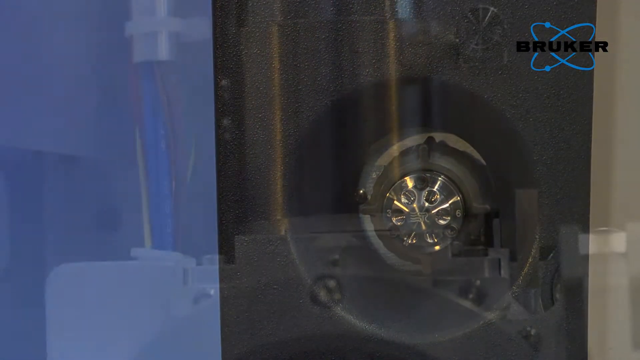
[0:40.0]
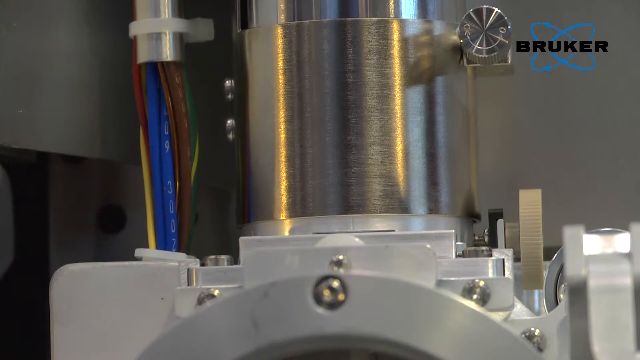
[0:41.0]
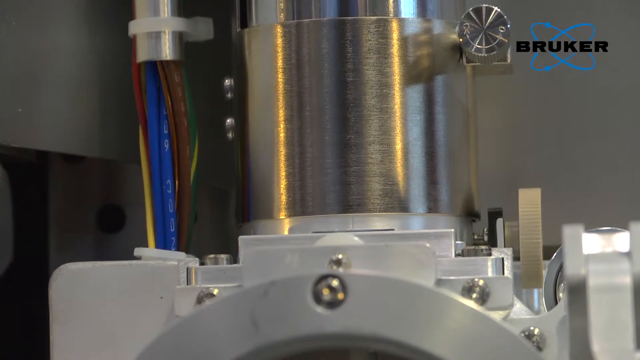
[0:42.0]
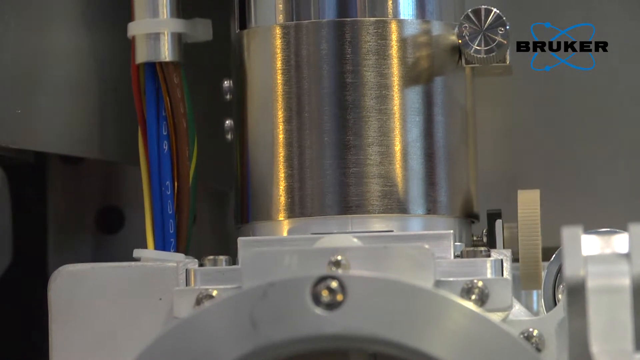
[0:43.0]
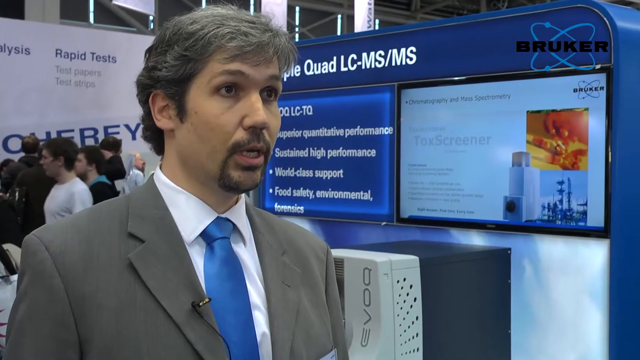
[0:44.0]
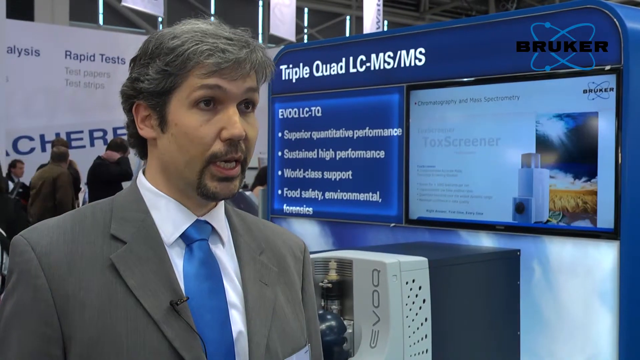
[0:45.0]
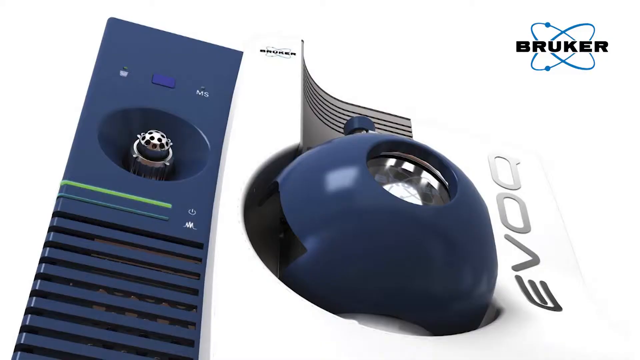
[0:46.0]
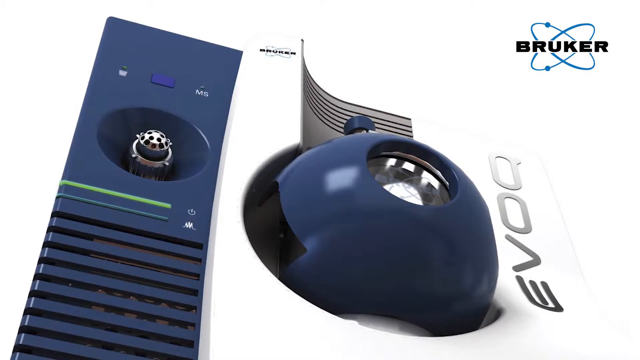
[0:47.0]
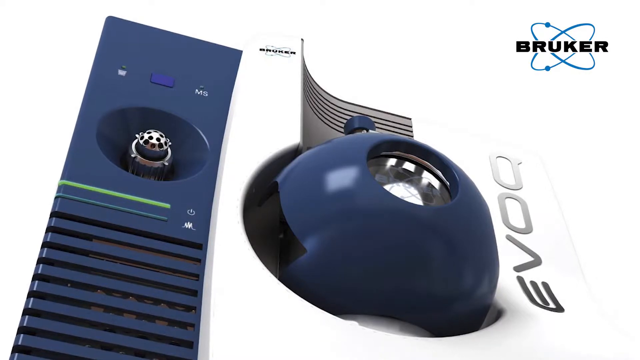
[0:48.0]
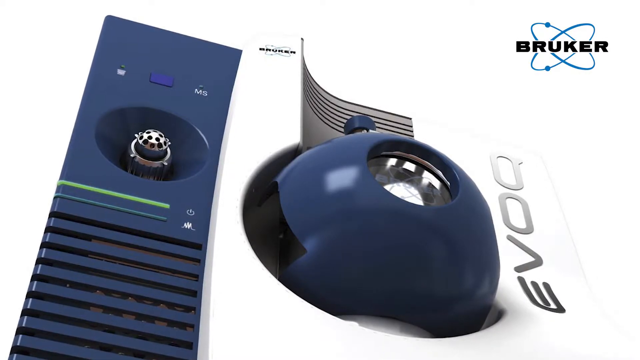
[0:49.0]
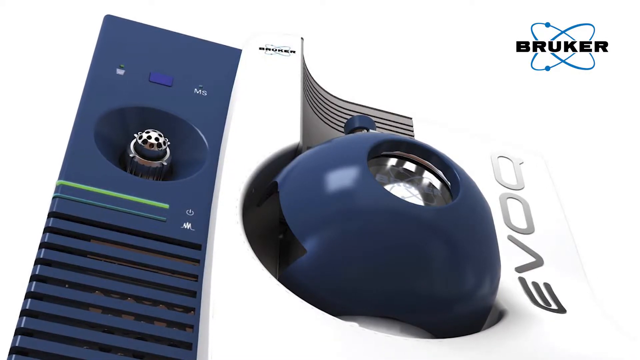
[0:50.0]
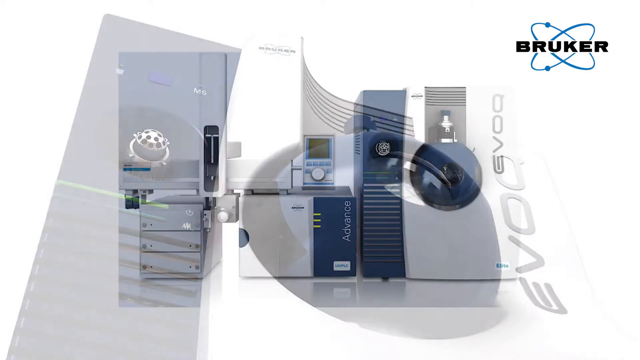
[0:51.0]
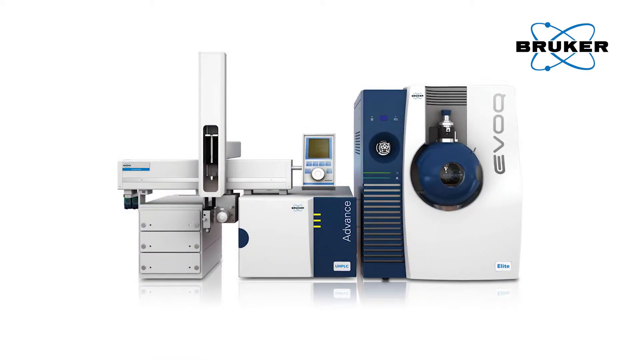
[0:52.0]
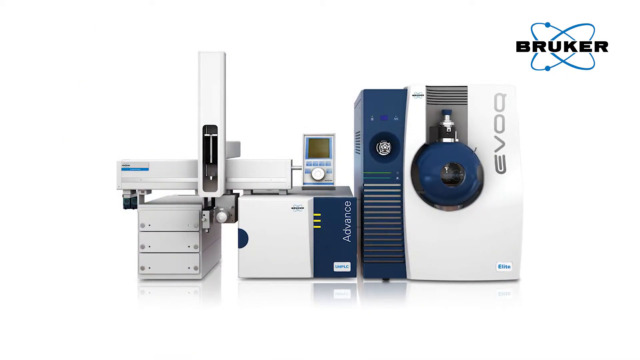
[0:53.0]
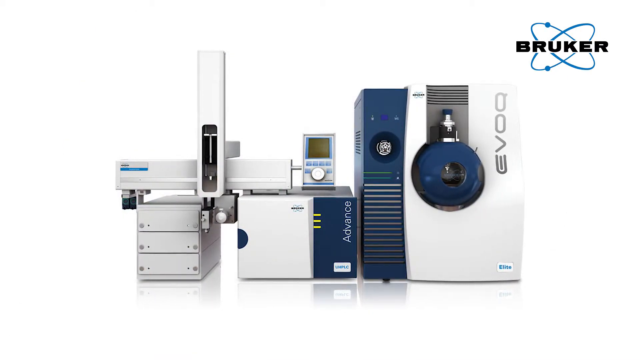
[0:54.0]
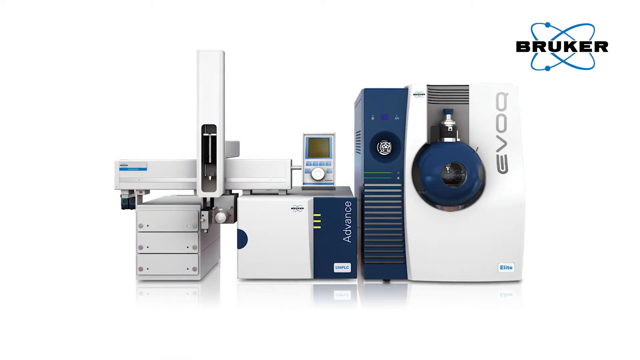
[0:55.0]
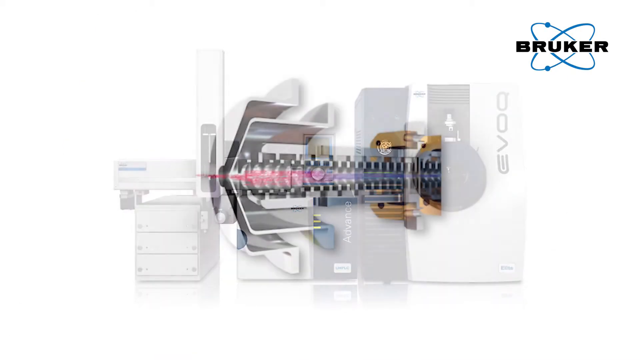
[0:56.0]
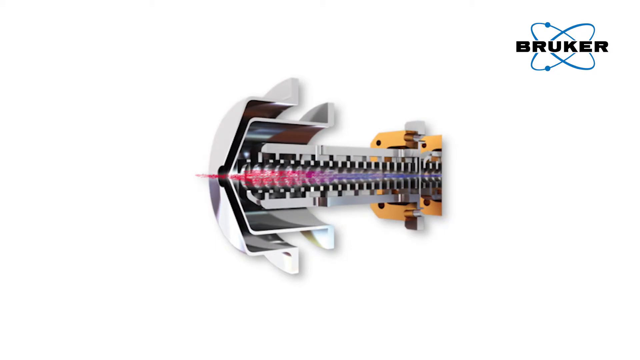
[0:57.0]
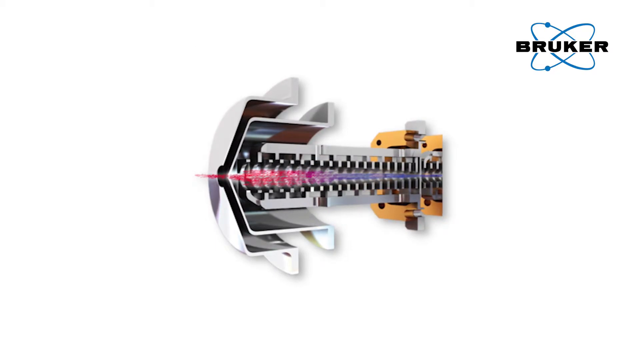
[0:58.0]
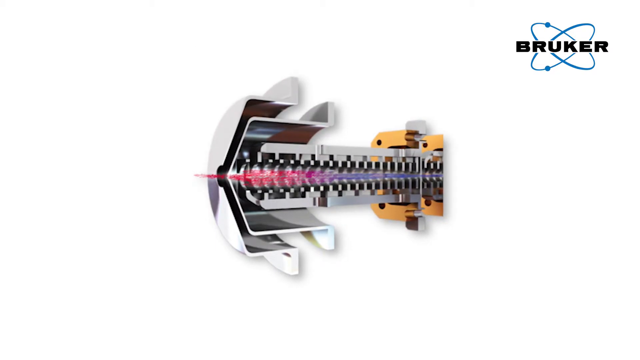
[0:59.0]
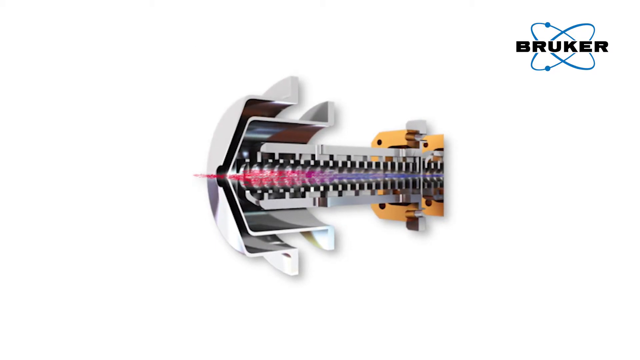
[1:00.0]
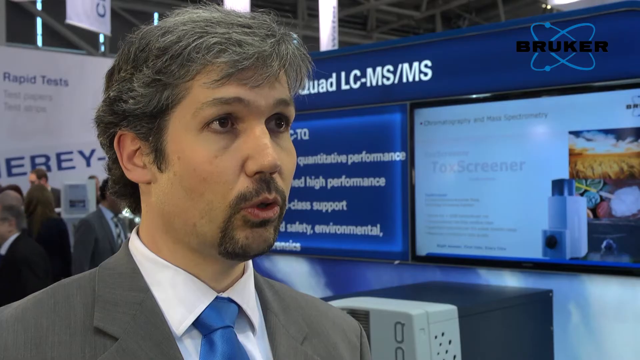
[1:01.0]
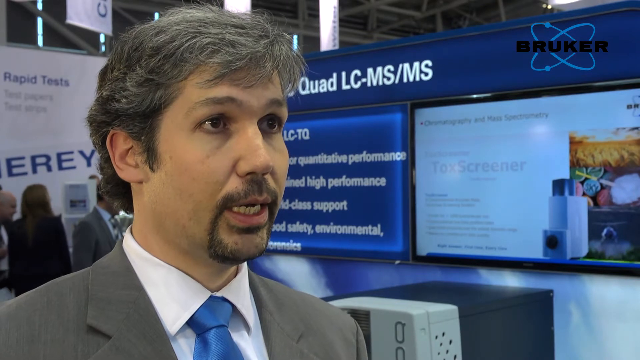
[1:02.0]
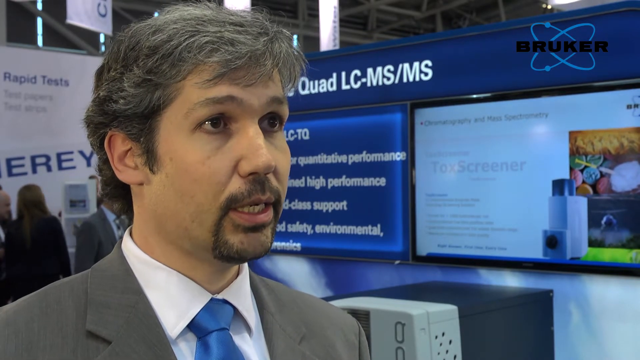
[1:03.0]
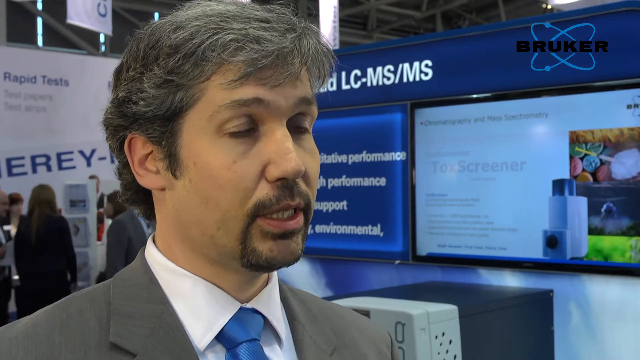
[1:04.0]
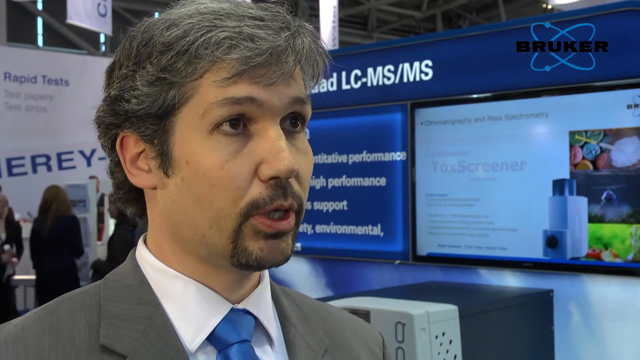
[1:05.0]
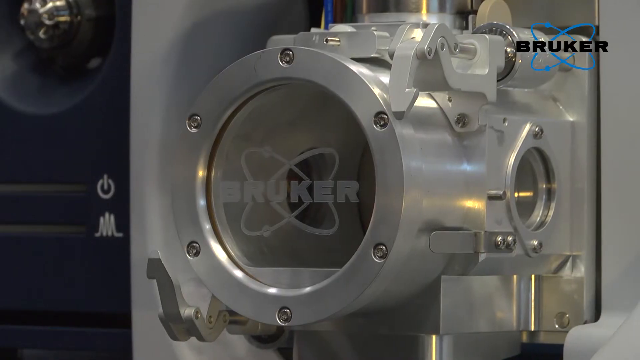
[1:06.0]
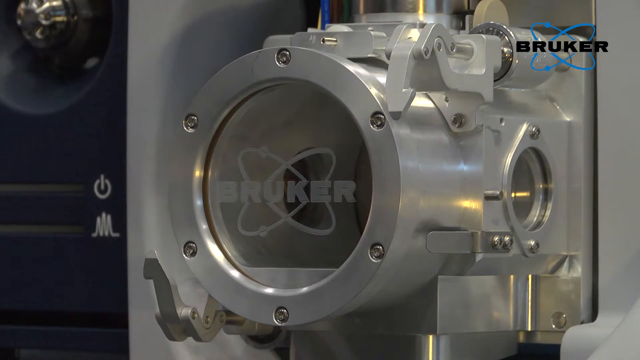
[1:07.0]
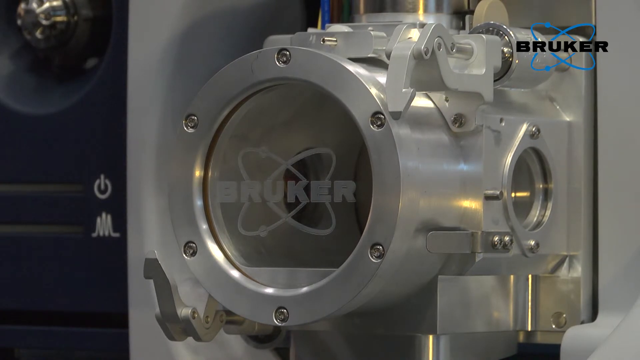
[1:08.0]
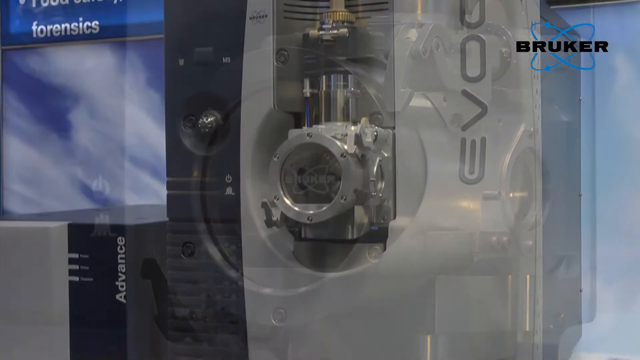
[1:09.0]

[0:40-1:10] The camera is zoomed in on the machine, showing part of the valve, with multicolored wires in blue, yellow, red and green tied together to the left. The camera pans back to the man talking, who wears a gray suit, a white shirt and a blue tie, in a convention center where people walk around and converse among themselves. The camera then shows a picture of the machine with the same EVOC label at the top right, but it looks very different: it is blue and white and looks like a concept rendering. Here the machine is next to other appliances, to the right of two other boxes sitting on the ground, with a Bruker logo at the top right. Next comes a picture of a cross-section of part of the machine. The camera goes back to the man speaking into the camera, then pans over the logo of the machine and the machine itself.